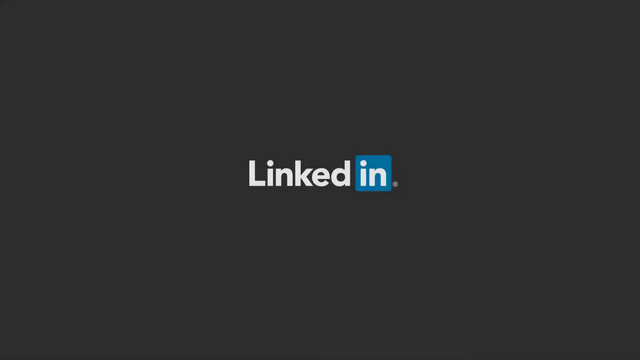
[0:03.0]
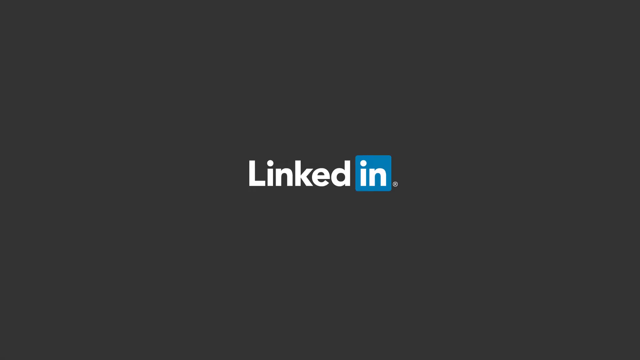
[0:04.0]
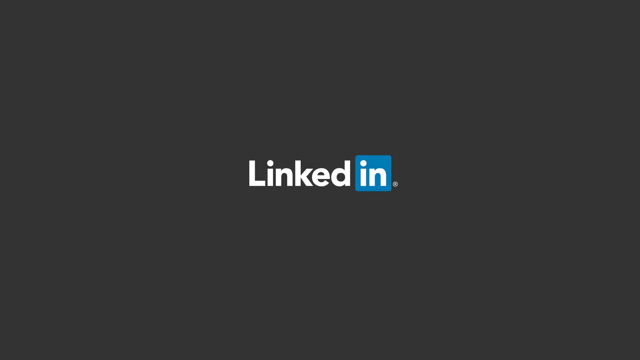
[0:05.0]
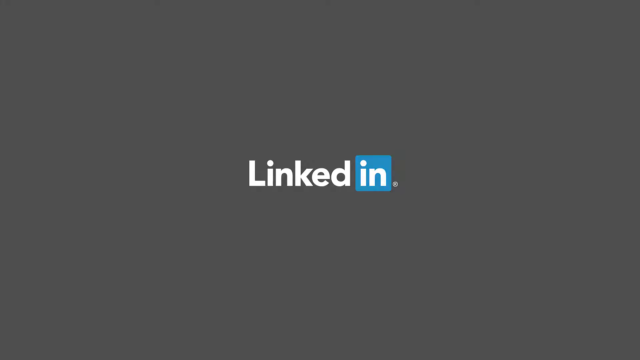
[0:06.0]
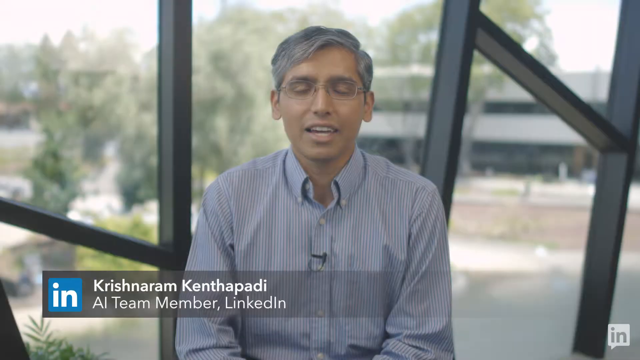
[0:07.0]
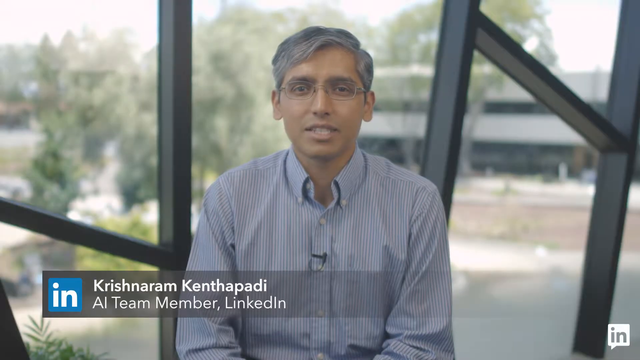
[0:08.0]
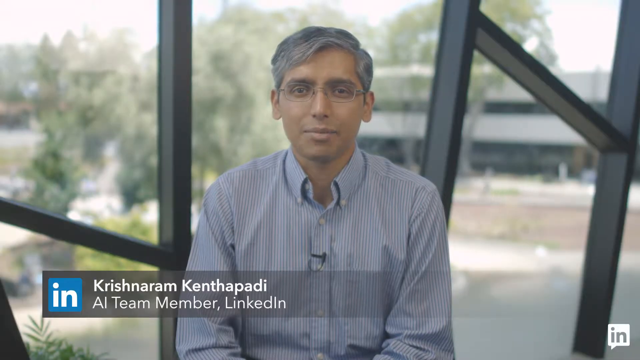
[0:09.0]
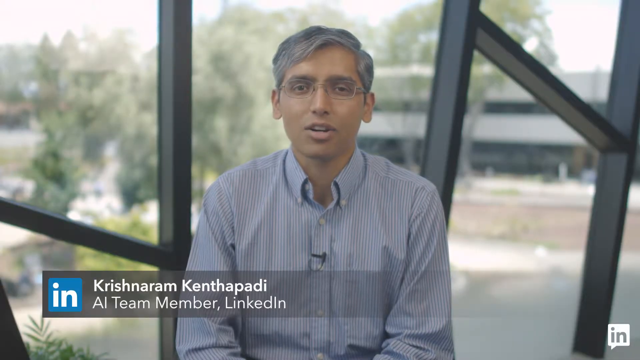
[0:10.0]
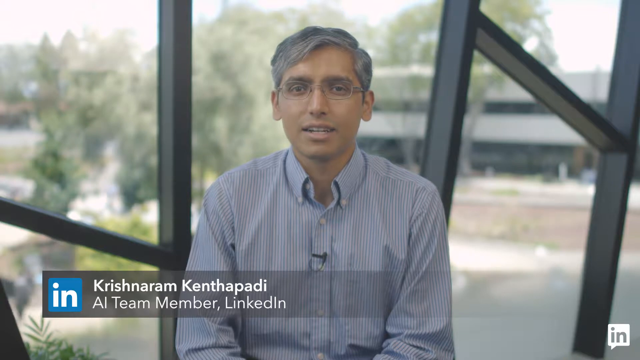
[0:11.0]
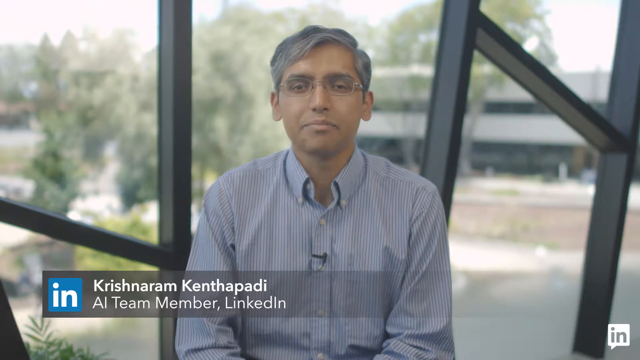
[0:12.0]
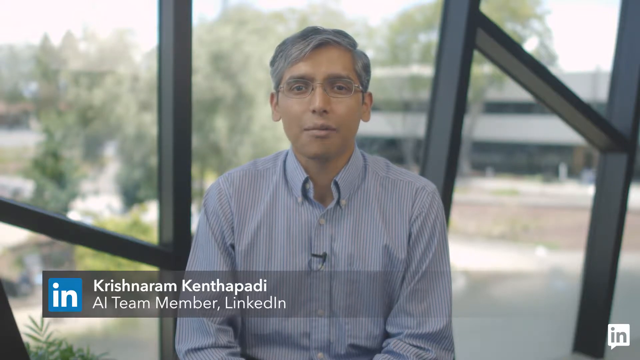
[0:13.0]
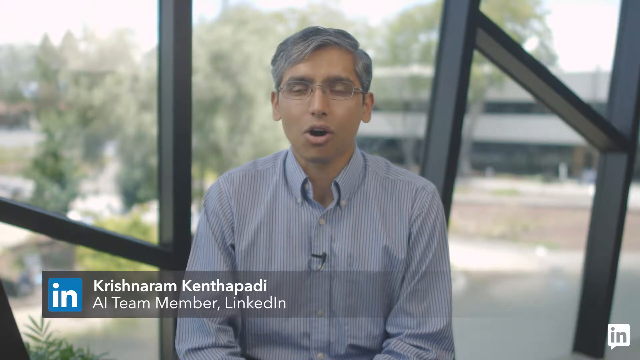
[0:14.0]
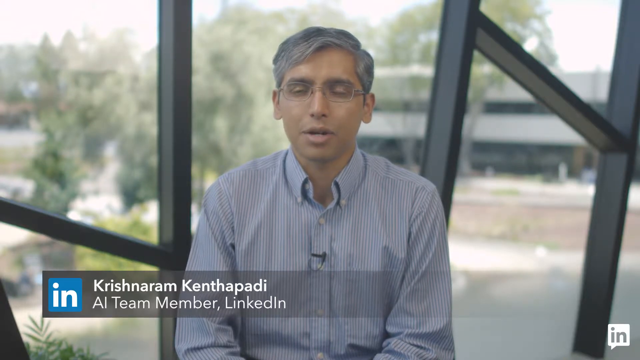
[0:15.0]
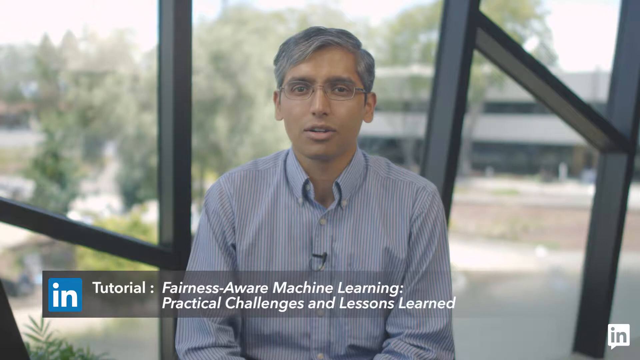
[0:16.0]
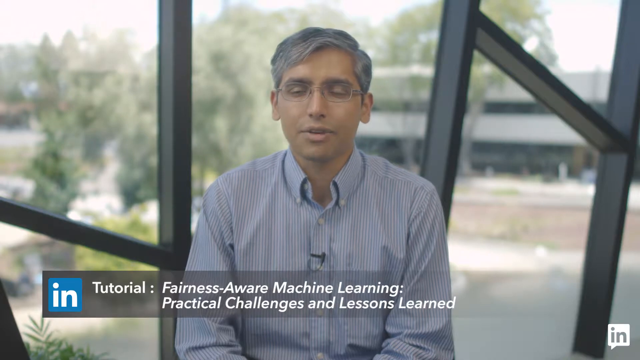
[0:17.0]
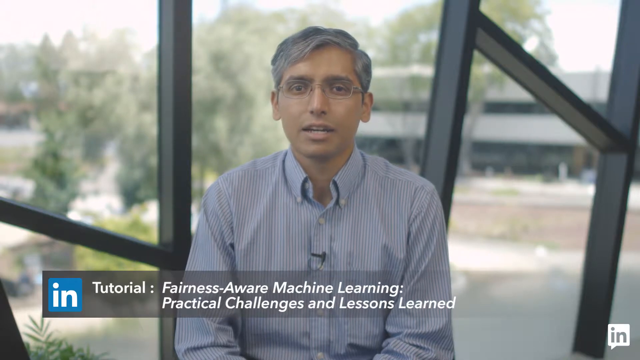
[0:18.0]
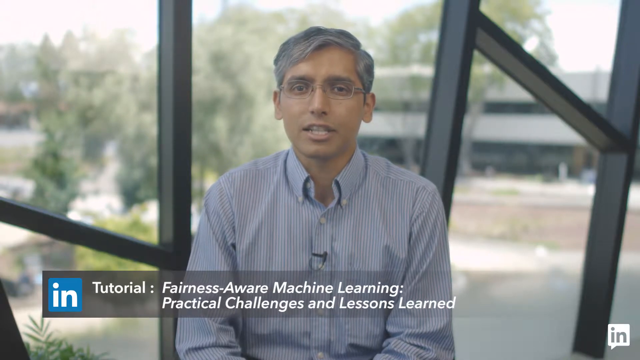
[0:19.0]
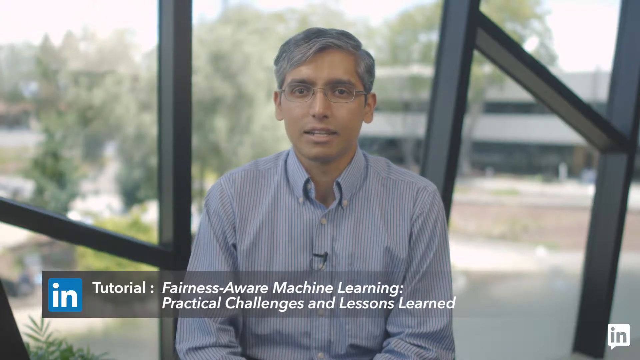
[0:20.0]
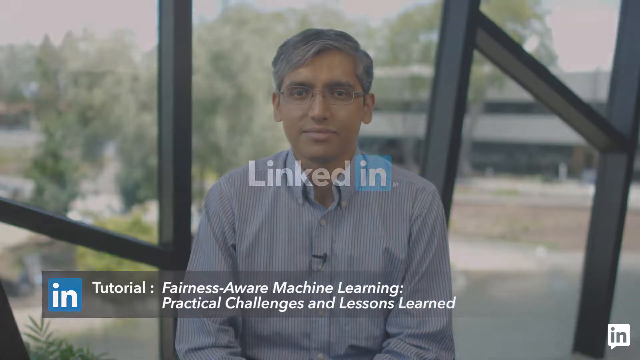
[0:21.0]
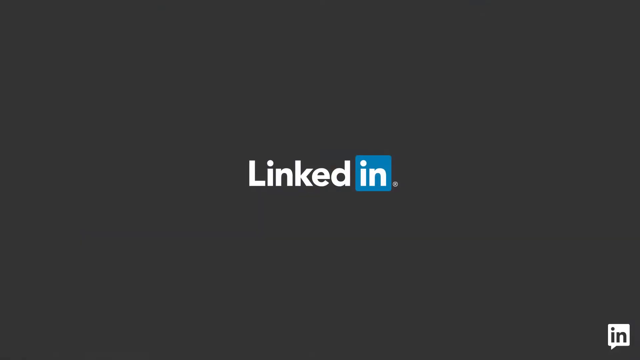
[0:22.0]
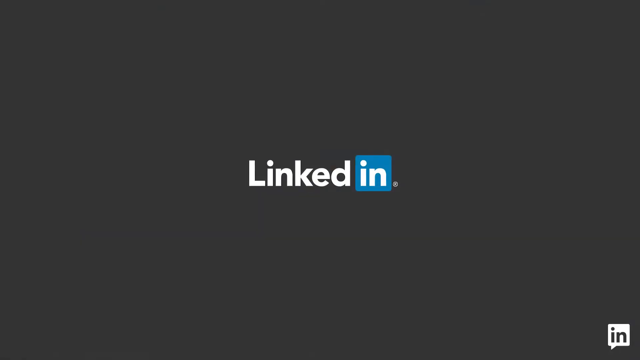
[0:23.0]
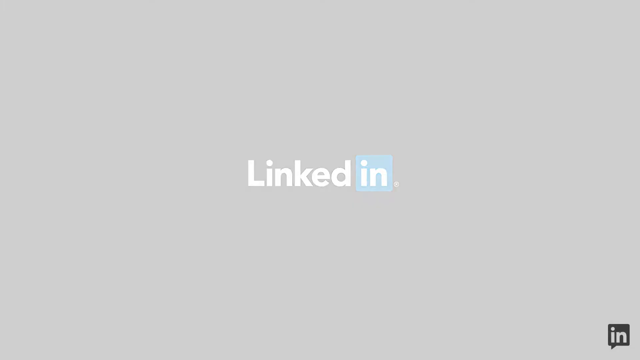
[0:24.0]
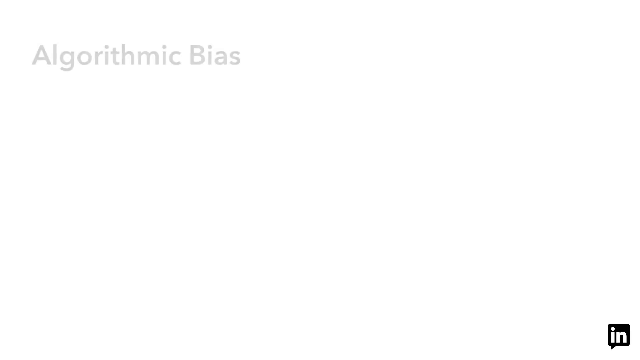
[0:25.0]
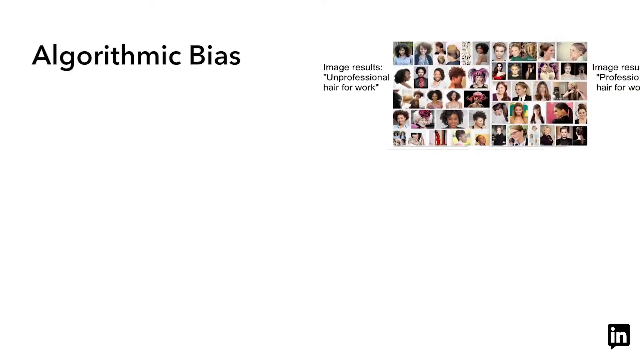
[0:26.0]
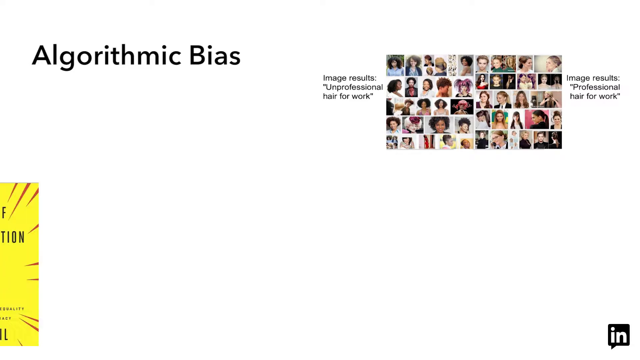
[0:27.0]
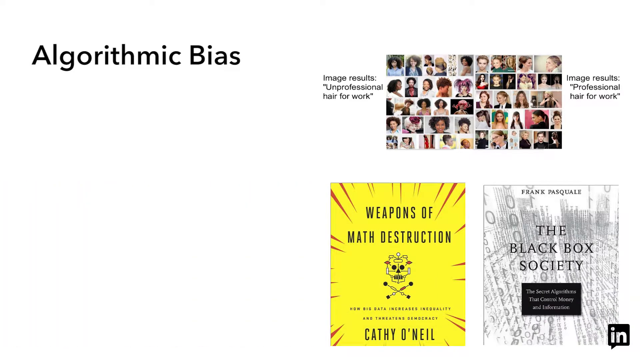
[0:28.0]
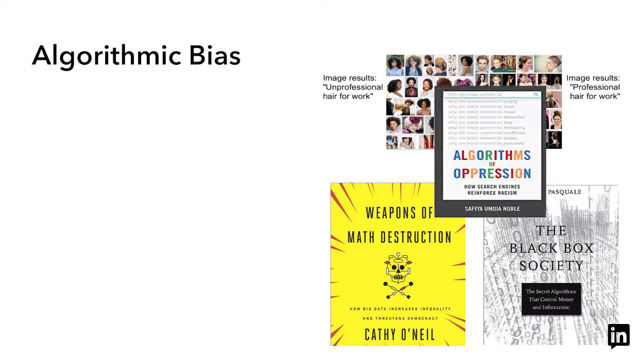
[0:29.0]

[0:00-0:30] The LinkedIn logo fades into frame on a black background, then fades out. A gentleman named Krishnaram Kantharapati appears in an interview-style shot, sitting down and facing the camera. Behind him is what looks like an office background, with windows facing what looks like a campus of some kind, maybe a university campus or the LinkedIn offices. Text at the bottom of the screen, beneath him, reads "tutorial fairness aware machine learning: practical challenges and lessons learned". The screen then fades to black with the LinkedIn logo again, and then fades to white, opening an "algorithmic bias" slide of a presentation he is probably speaking over.